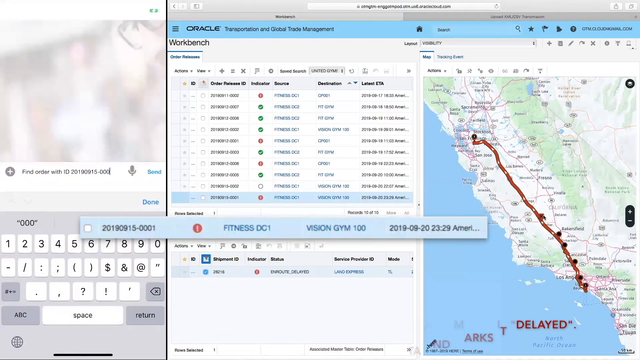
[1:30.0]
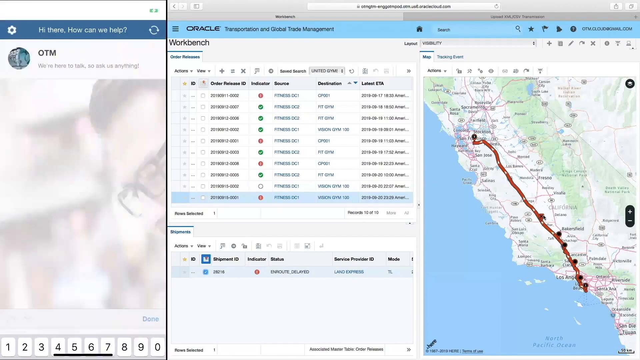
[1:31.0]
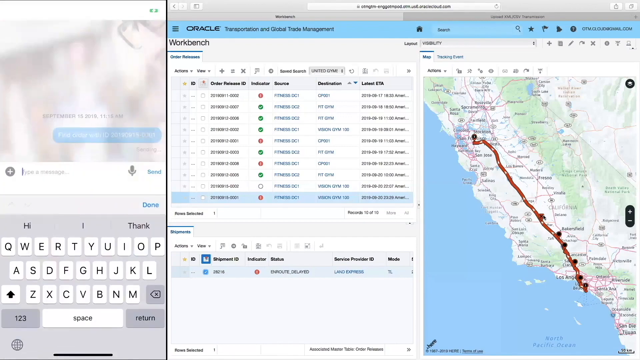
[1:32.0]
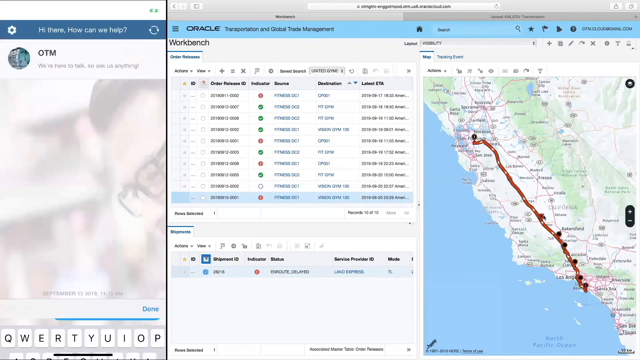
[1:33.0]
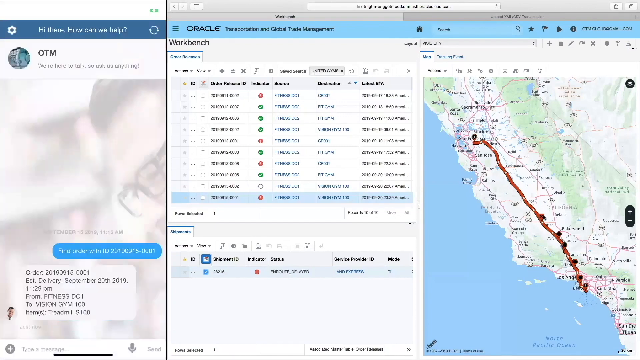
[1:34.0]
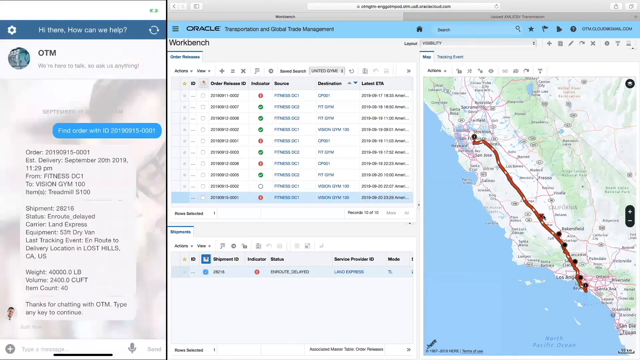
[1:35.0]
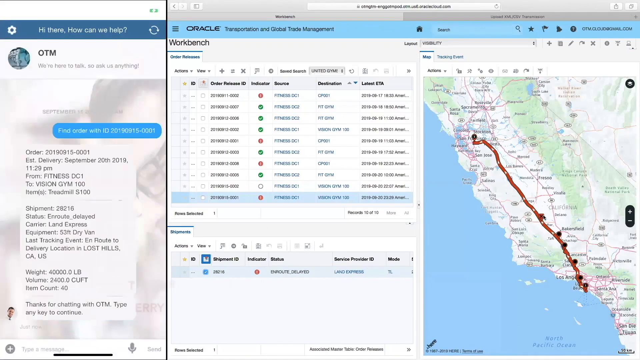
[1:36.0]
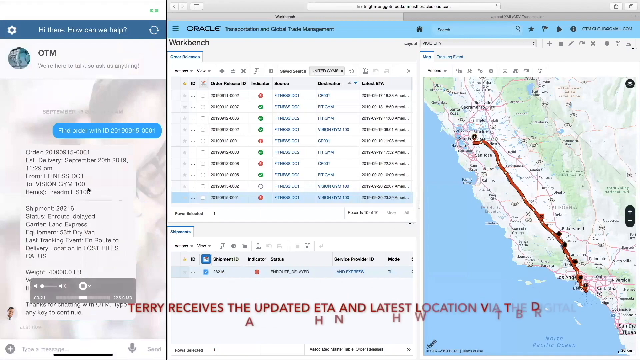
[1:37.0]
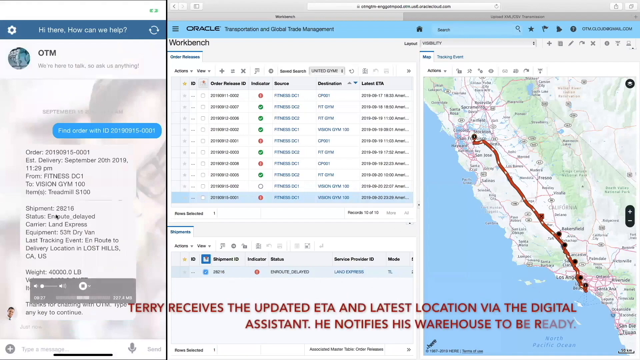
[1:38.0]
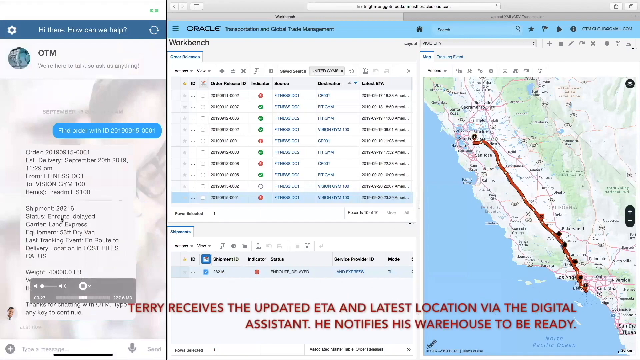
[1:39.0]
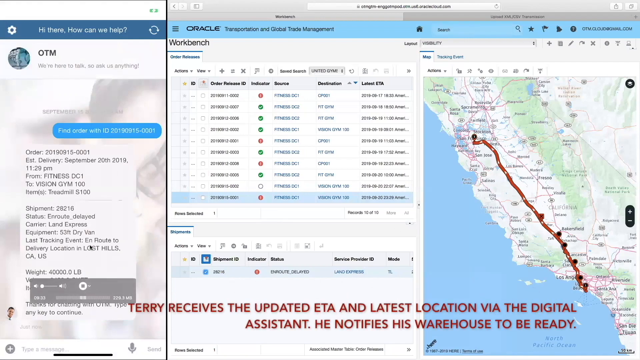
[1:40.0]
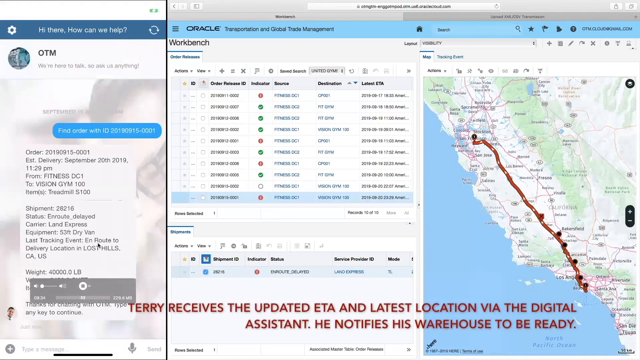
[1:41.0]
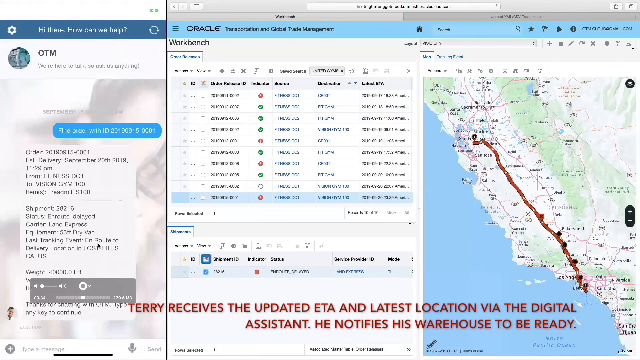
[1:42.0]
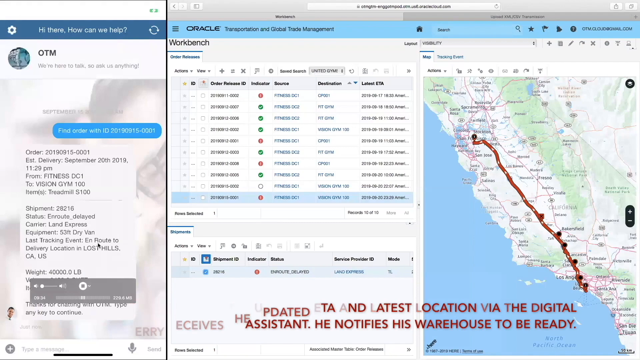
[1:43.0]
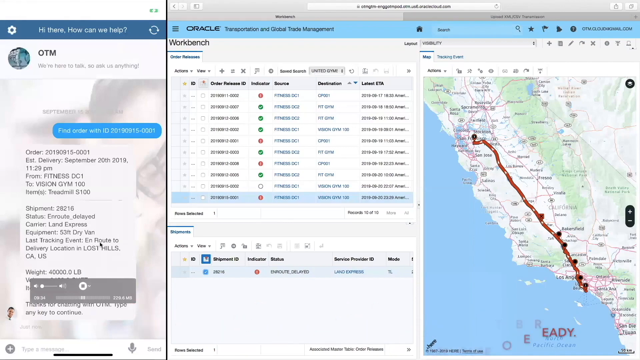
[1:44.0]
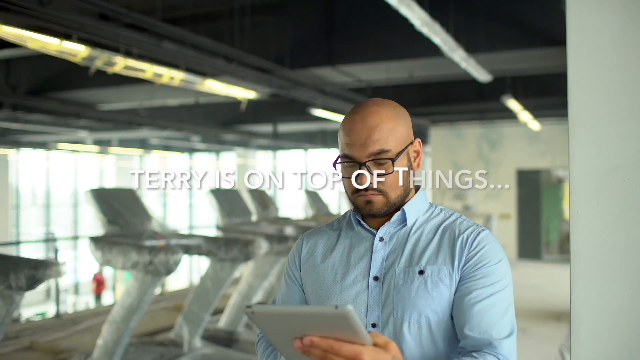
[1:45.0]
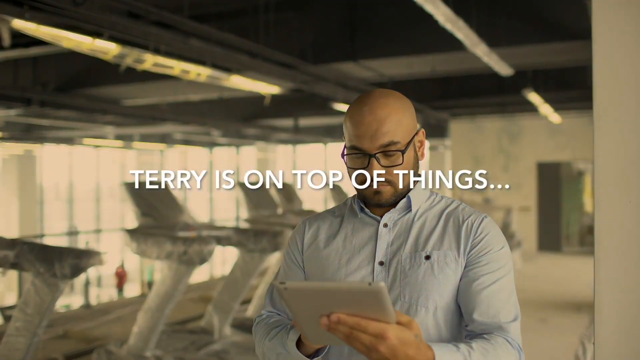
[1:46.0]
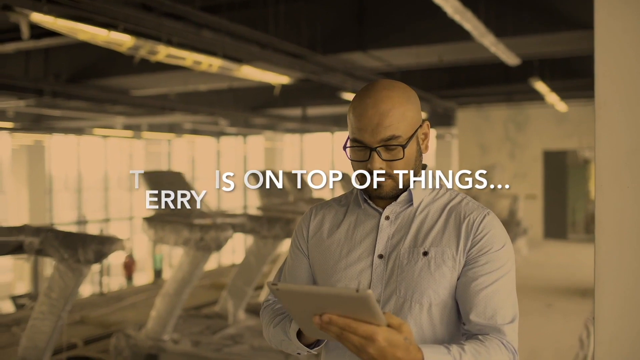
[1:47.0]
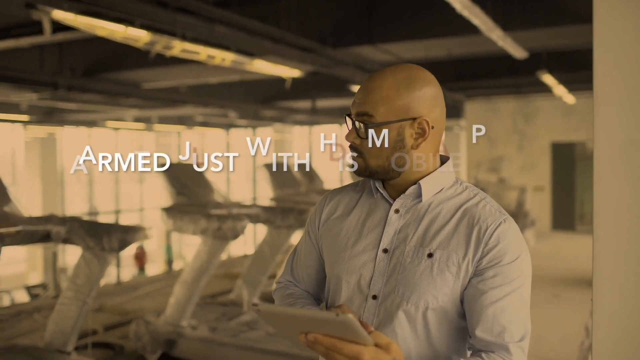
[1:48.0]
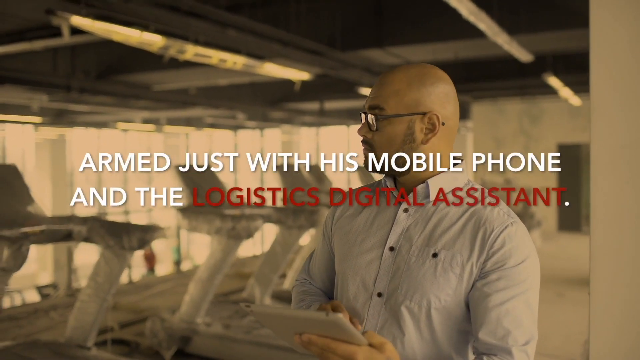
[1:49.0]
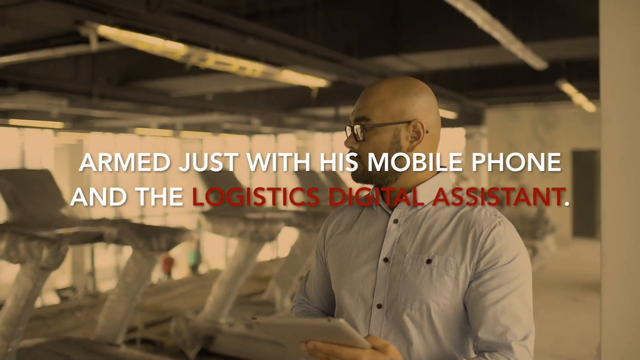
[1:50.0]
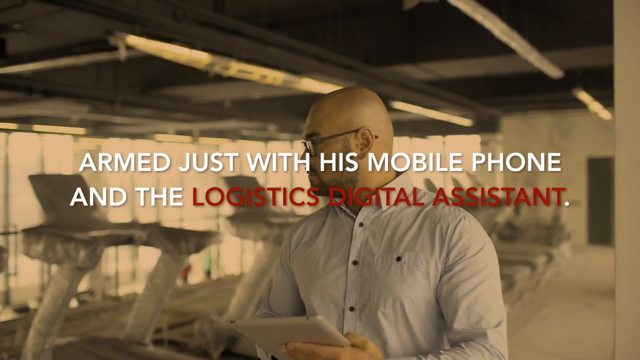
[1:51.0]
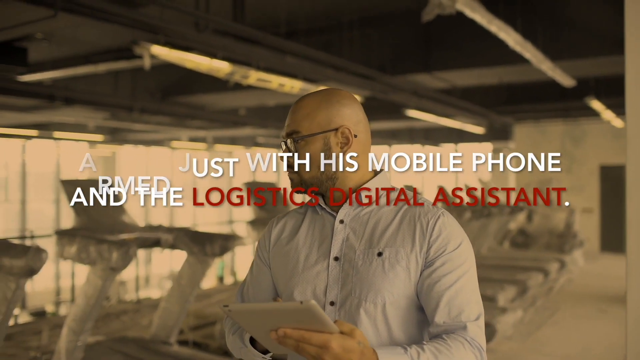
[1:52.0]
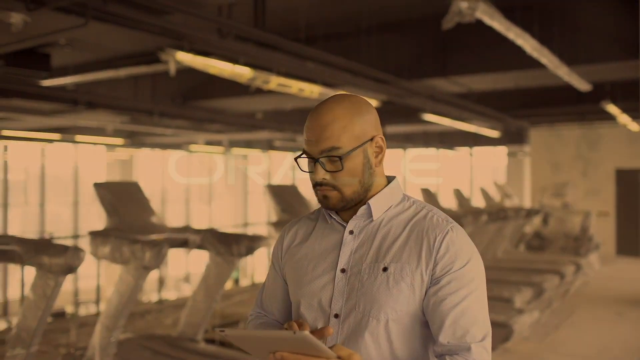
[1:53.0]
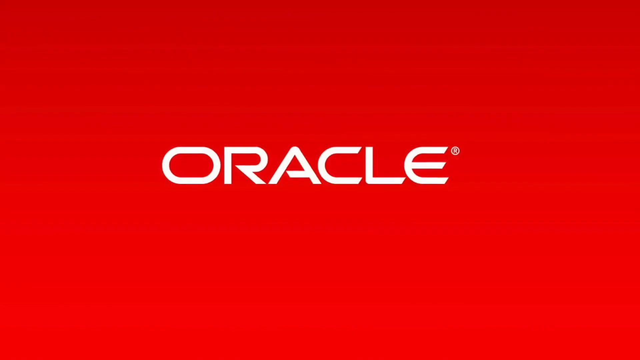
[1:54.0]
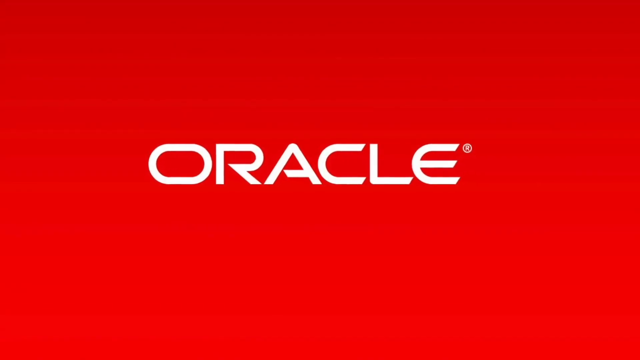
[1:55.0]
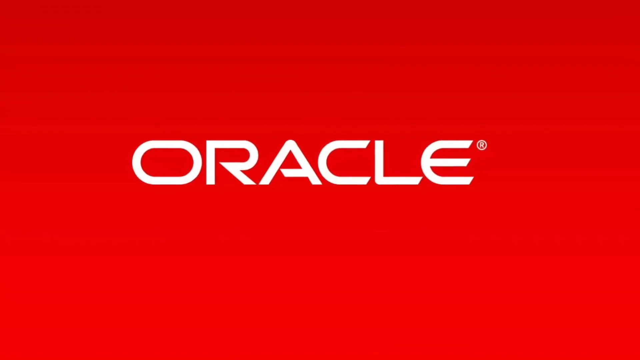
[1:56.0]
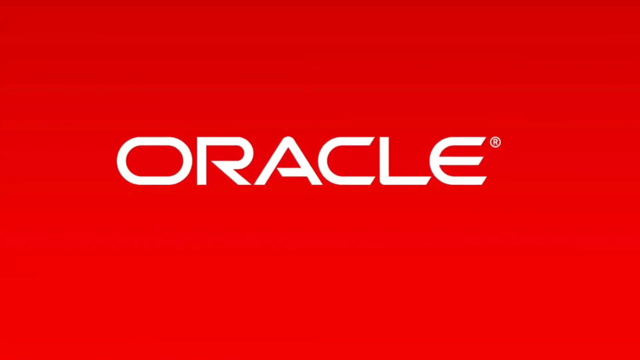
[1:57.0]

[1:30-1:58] The user sends the message to OTM and gets a response almost instantly, showing the information about the order. Text at the bottom reads "Terry receives the updated ETA and latest location via the digital assistant. He notifies his warehouse to be ready." He then records something on the message board, and the video switches to a screen with "Terry is on top of things" in white text in the middle, over a shot of the bald man with a beard and glasses walking through his equipment inventory once again. He looks at an iPad and then very slowly looks up at the equipment. The words "armed just with his mobile phone and the logistics digital assistant" appear on the screen, and the video's coloring turns to a sepia tone. The text disappears, the screen turns red, and an Oracle logo appears in the center and slowly zooms in until the end.